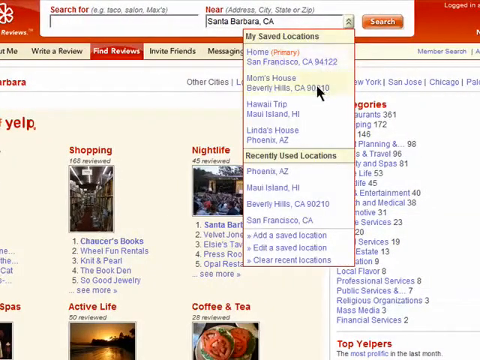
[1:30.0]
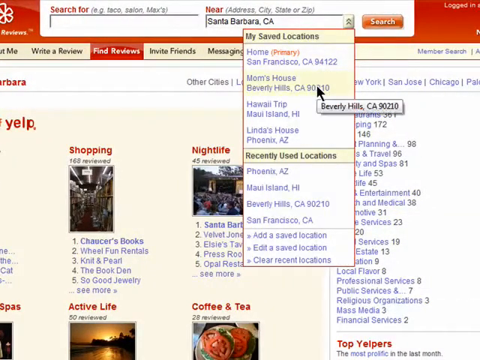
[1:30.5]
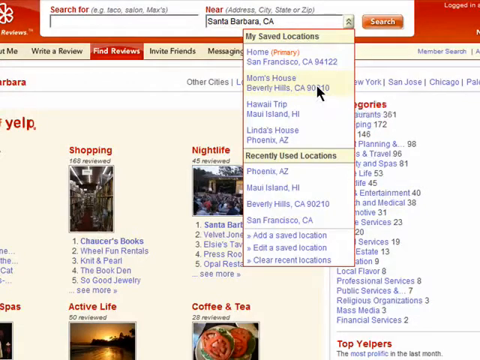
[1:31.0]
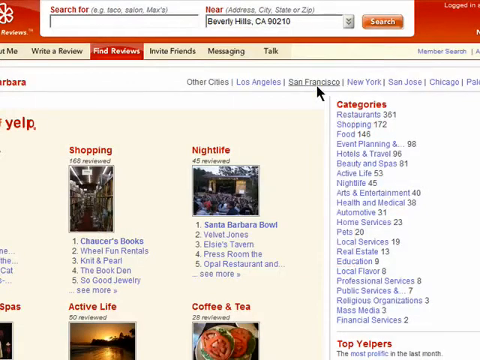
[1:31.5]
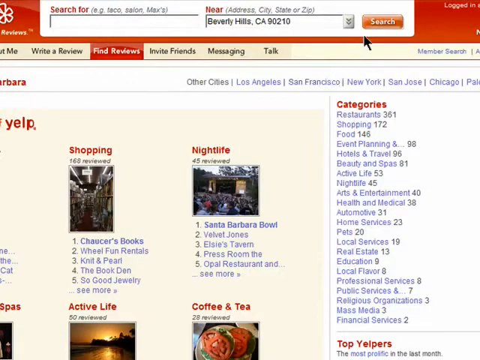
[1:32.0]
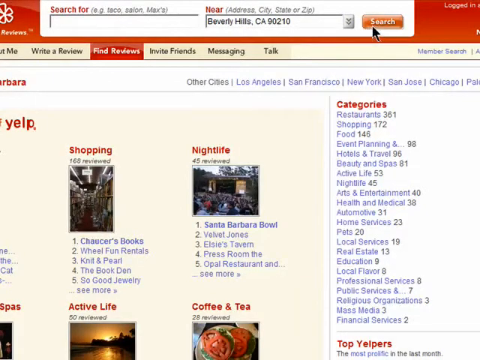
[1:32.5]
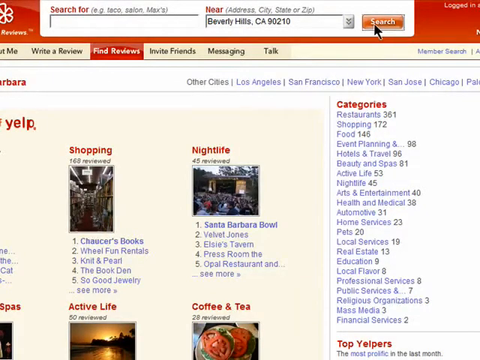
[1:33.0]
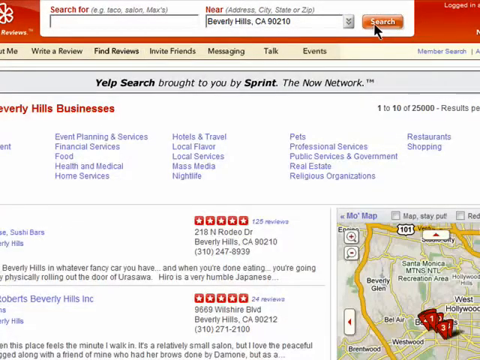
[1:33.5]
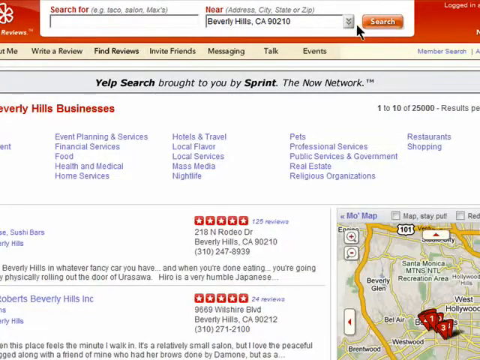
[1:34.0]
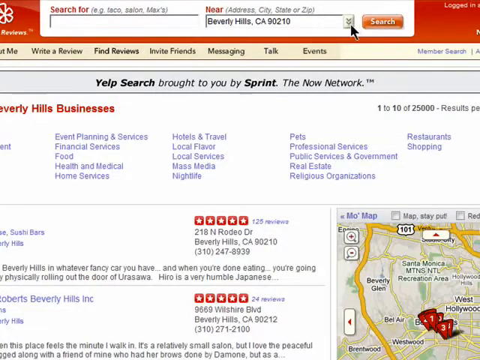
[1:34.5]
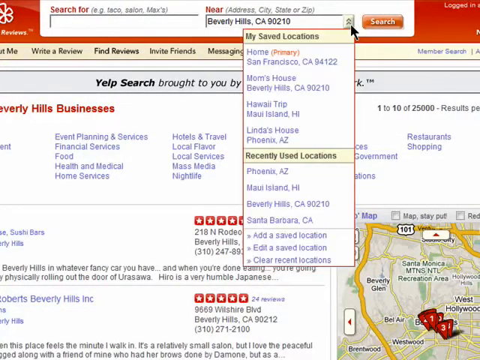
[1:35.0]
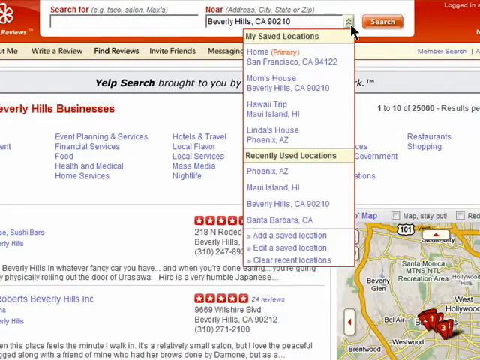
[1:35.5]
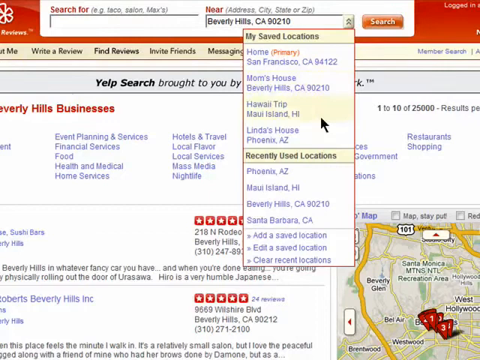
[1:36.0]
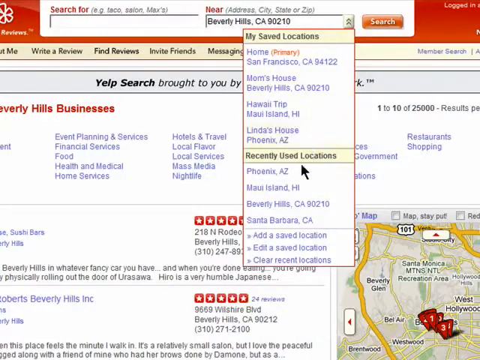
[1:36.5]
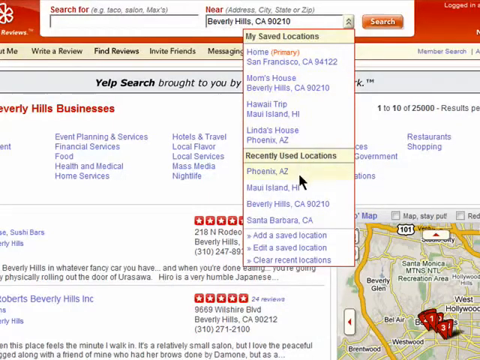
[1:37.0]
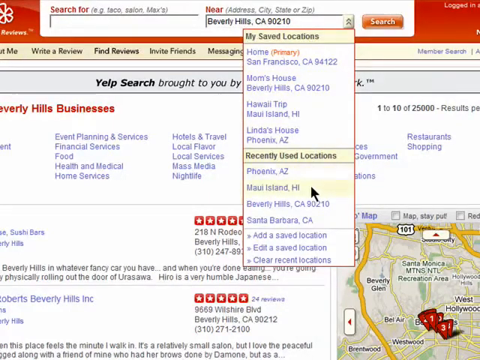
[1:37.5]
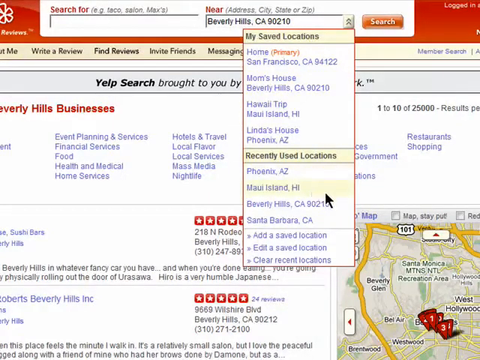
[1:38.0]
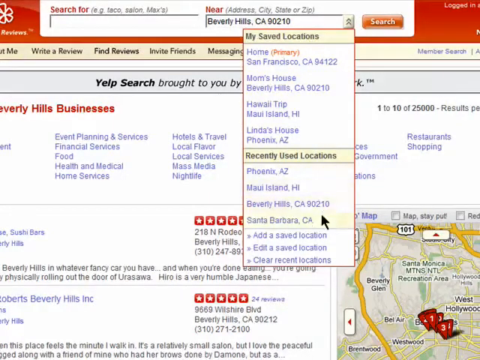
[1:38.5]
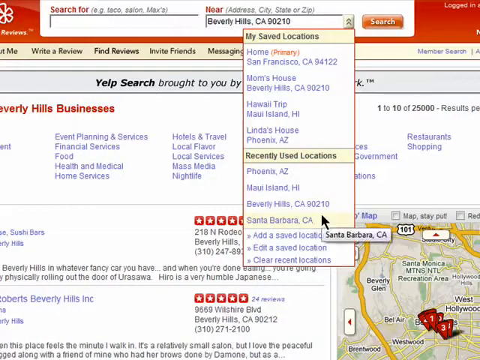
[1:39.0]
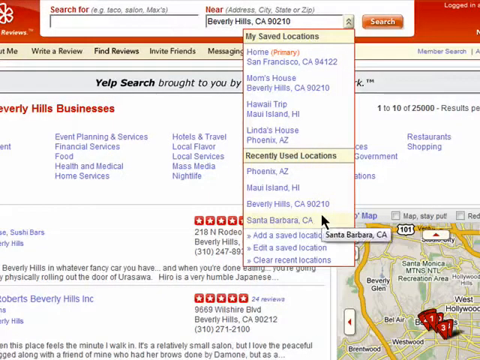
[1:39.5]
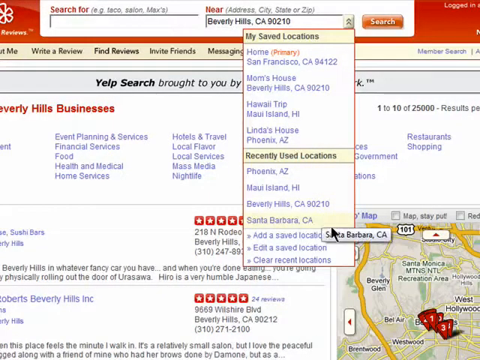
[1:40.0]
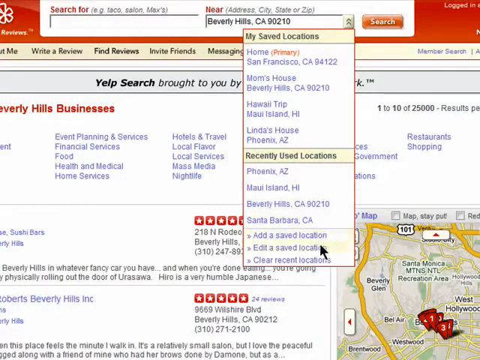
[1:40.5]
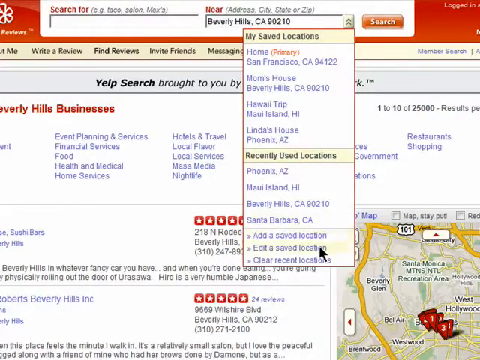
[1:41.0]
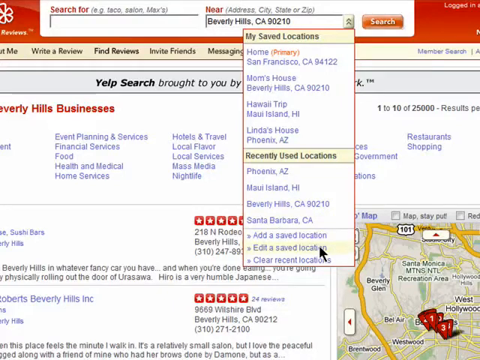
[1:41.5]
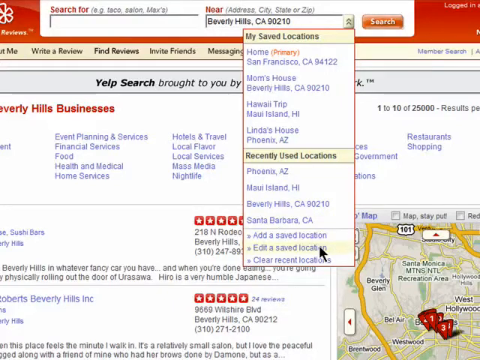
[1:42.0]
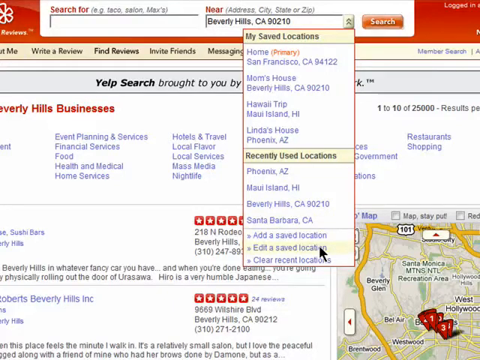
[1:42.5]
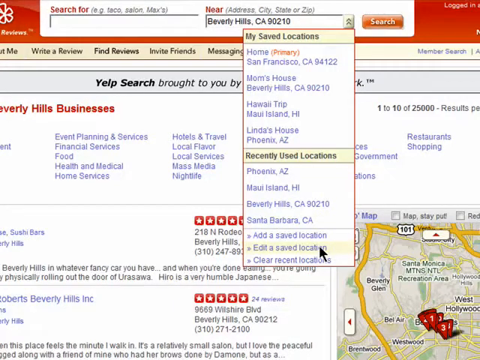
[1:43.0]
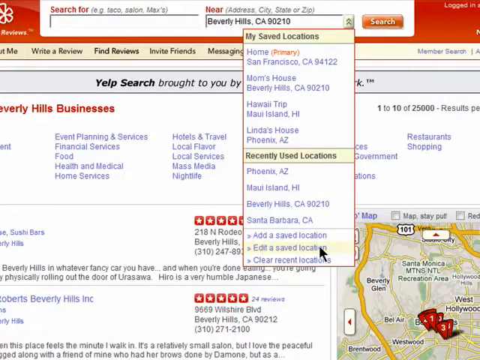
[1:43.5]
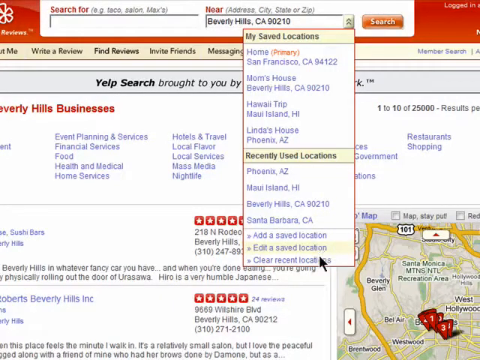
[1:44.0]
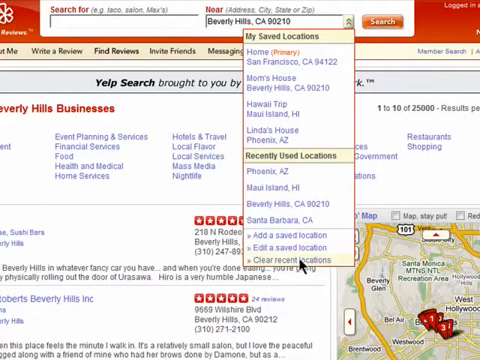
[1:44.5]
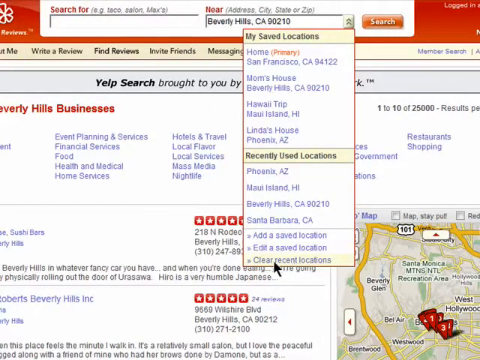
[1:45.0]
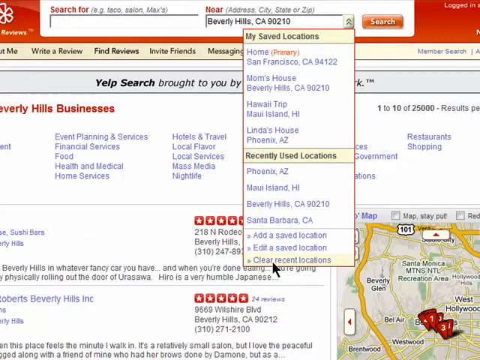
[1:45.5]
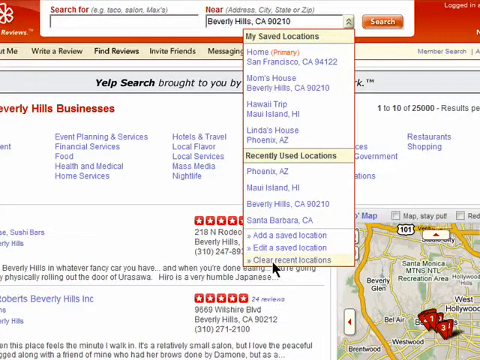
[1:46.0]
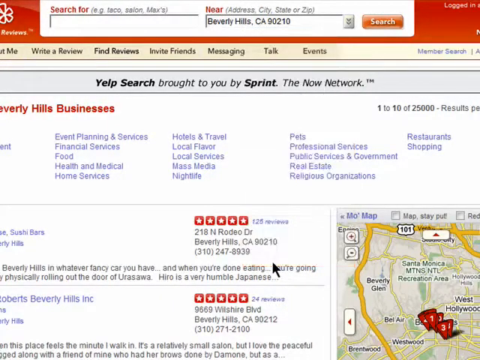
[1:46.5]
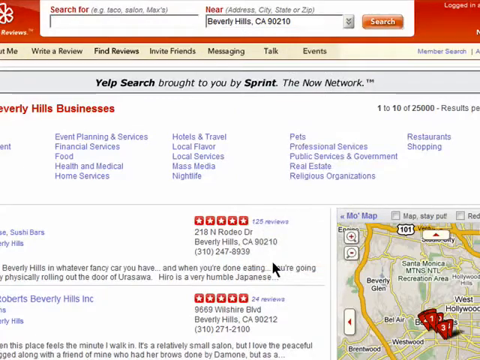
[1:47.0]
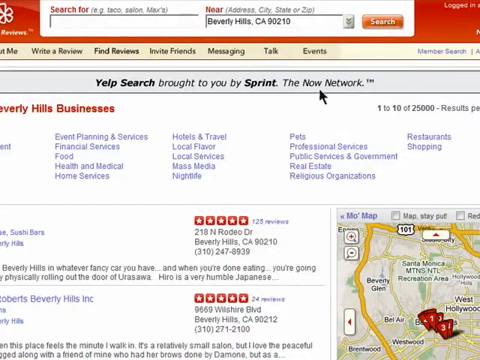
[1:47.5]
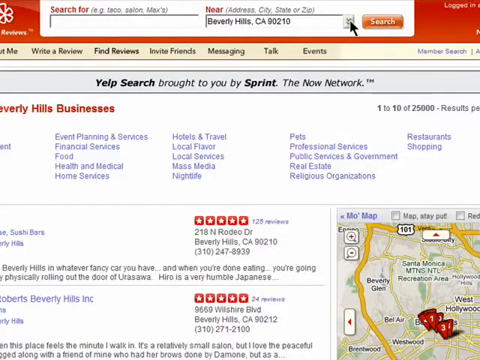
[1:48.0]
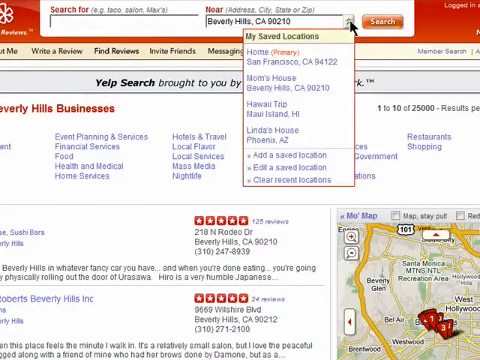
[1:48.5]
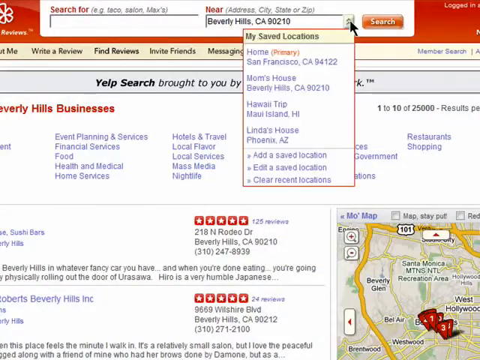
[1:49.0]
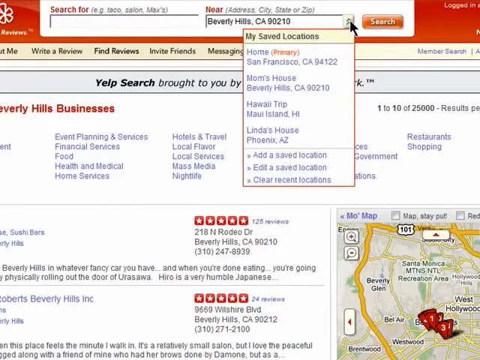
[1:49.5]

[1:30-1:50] The red Yelp banner contains "search for" with a white text box under it and "near" with a white text box under it. The "near" box currently holds Beverly Hills, California 90210. The white arrow clicks search, and the page lists businesses within the searched area. A double arrow is then clicked to open a dropdown menu, which lists Home as San Francisco, California 94122; Mom's House, Beverly Hills, California 90210; Hawaii Trip, Maui Island, Hawaii; and Linda's House, Phoenix, Arizona. Under those are recently used locations: Phoenix, Arizona; Maui Island, Hawaii; Beverly Hills, California; and Santa Barbara. The arrow goes down each listing, then goes to clear recent listings, and then the dropdown menu is clicked again.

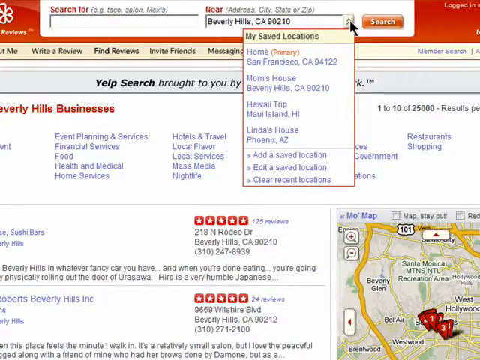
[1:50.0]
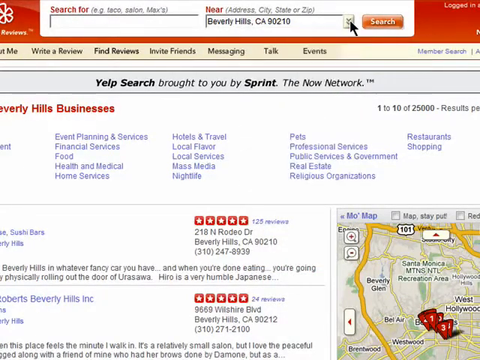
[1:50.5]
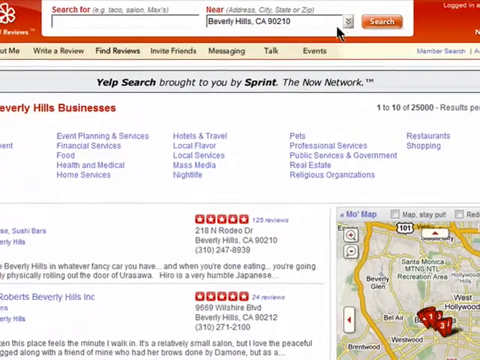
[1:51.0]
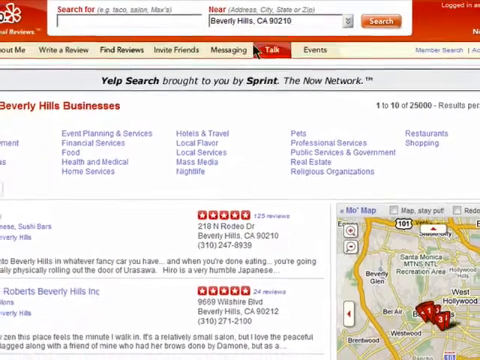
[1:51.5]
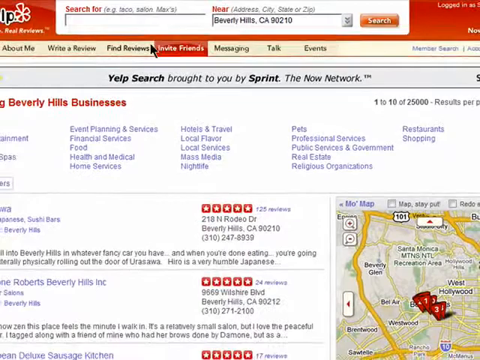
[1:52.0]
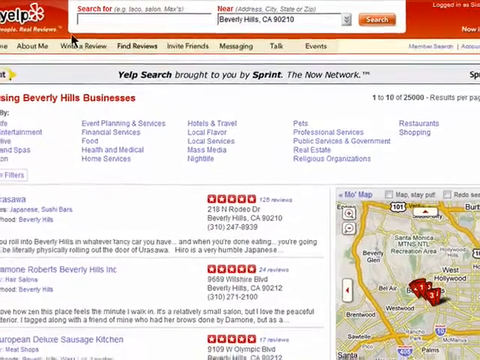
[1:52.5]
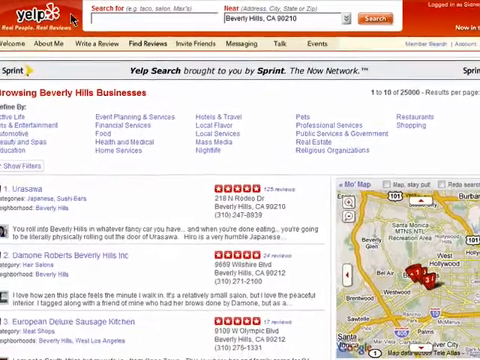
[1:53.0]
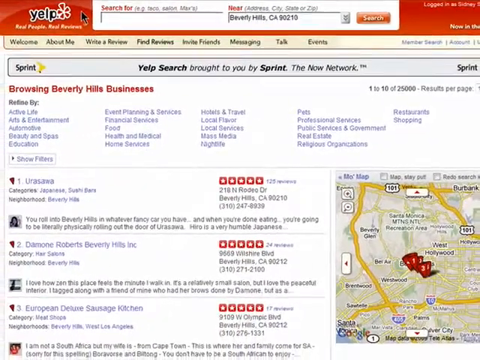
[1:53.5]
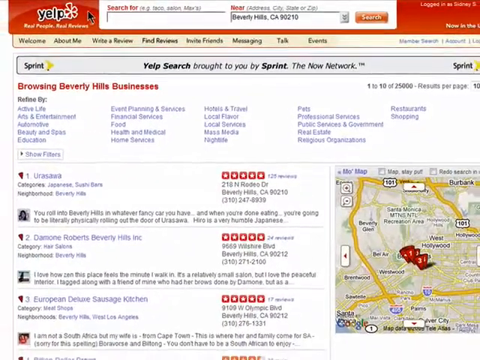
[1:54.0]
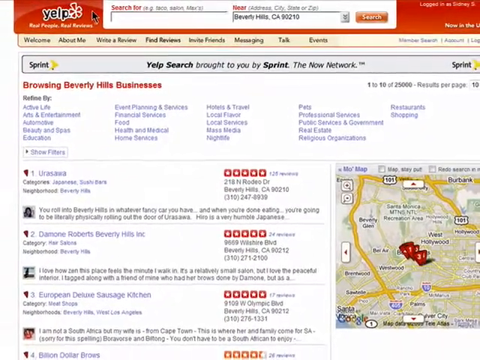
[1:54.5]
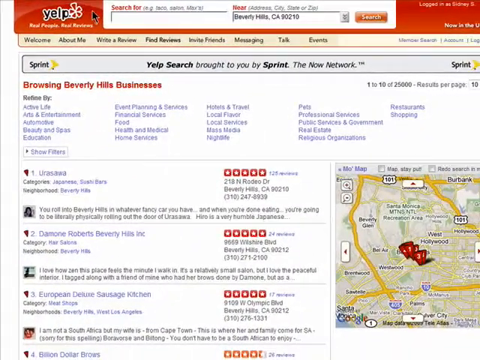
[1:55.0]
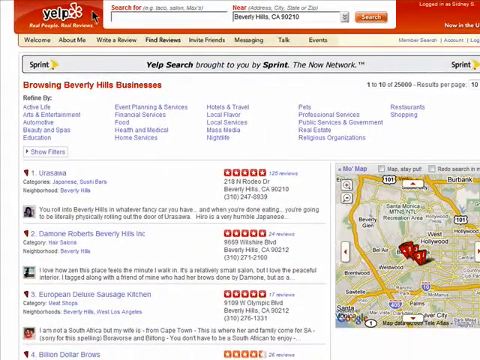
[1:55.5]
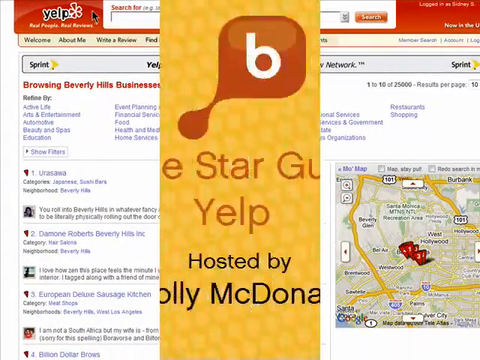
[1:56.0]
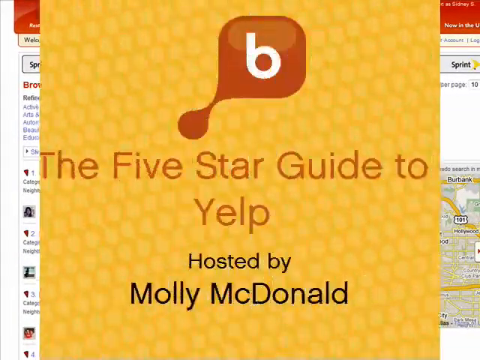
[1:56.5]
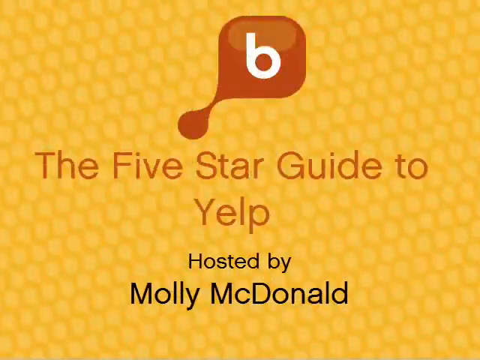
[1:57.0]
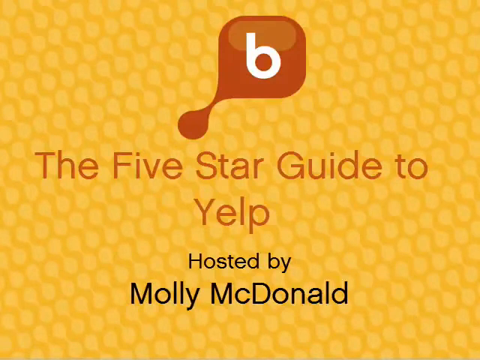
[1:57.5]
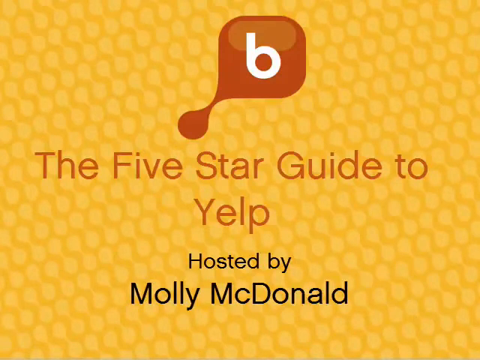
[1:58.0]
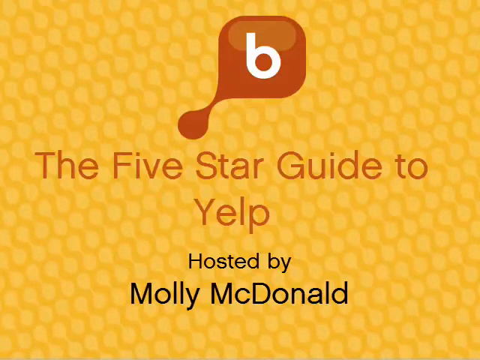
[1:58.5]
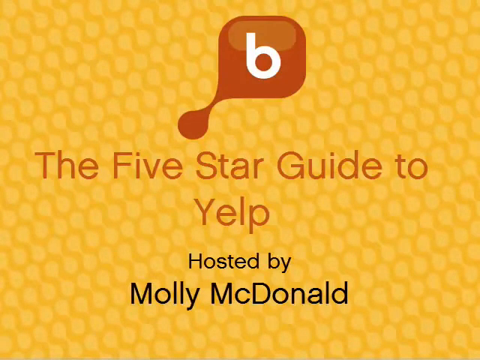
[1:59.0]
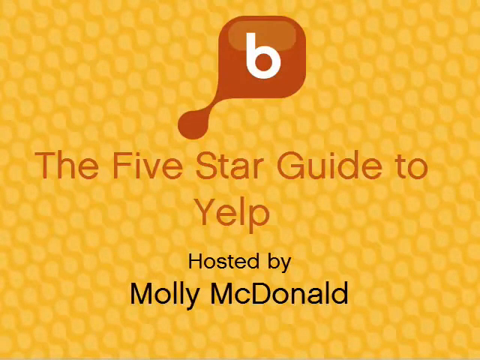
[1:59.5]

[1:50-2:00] The Yelp homepage returns, and the black arrow moves to the Yelp logo on the left. The Yelp page is mostly white, with listings of Beverly Hills businesses shown in blue as clickable links. The video then goes to the orange honeycomb screen, with a darker orange and a lighter orange within it in a honeycomb pattern. A bubble in a darker orange than the first contains a white bee. Then the title "the five-star guide to Yelp" appears in the same color as the bubble, and under the title, in black, is "hosted by Molly McDaniel."